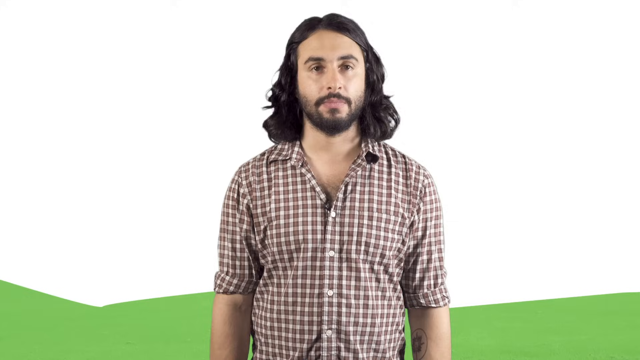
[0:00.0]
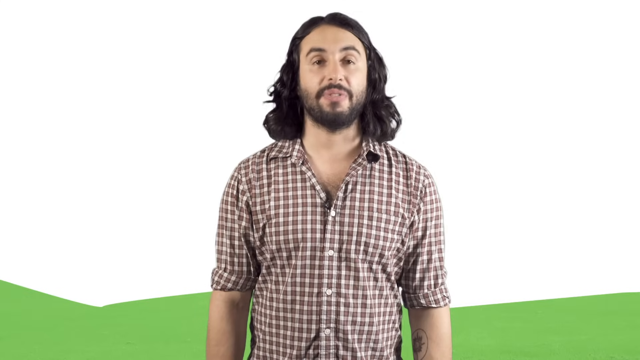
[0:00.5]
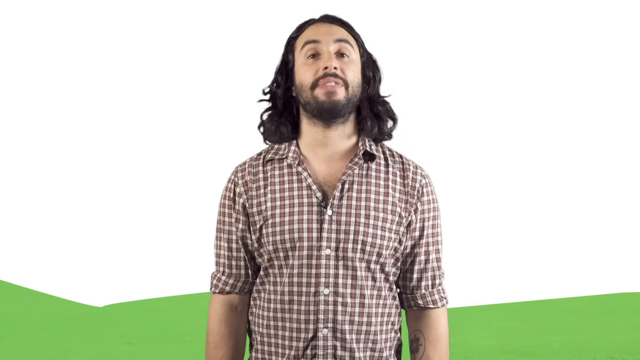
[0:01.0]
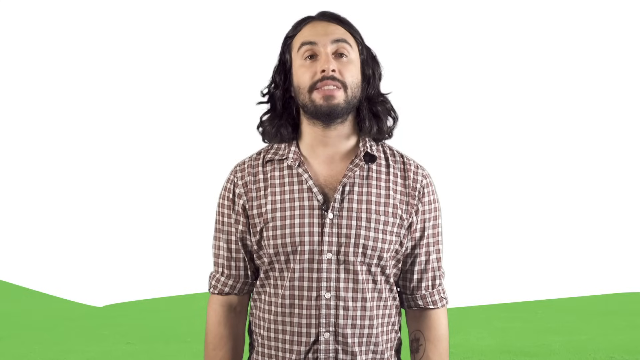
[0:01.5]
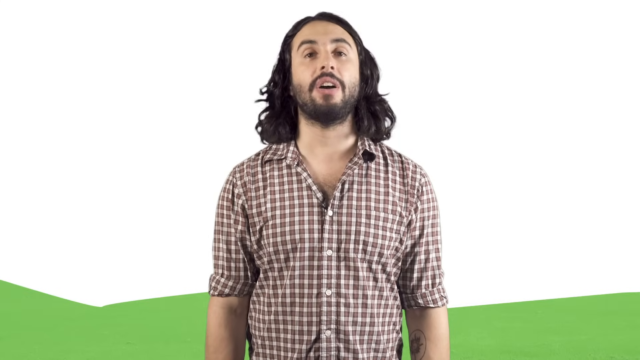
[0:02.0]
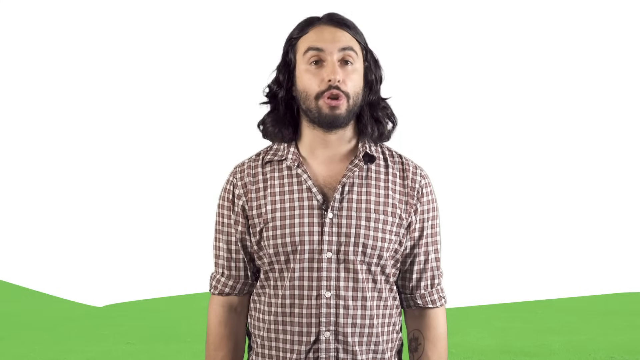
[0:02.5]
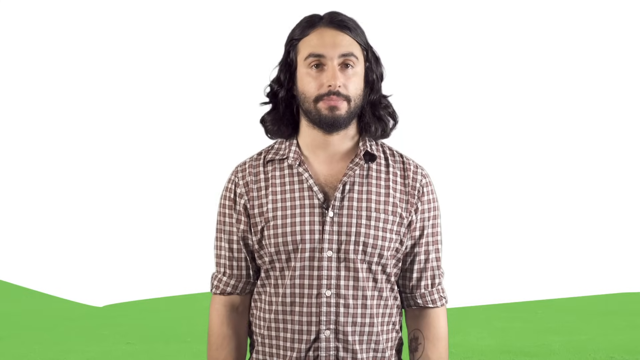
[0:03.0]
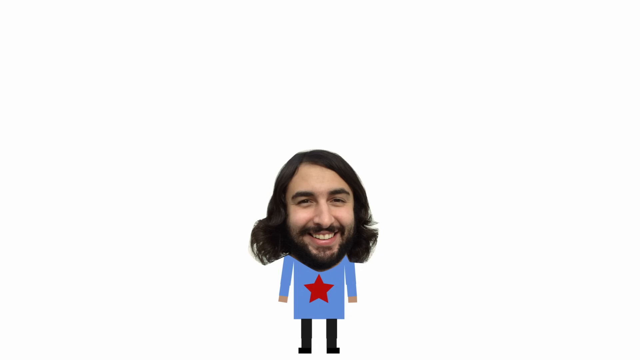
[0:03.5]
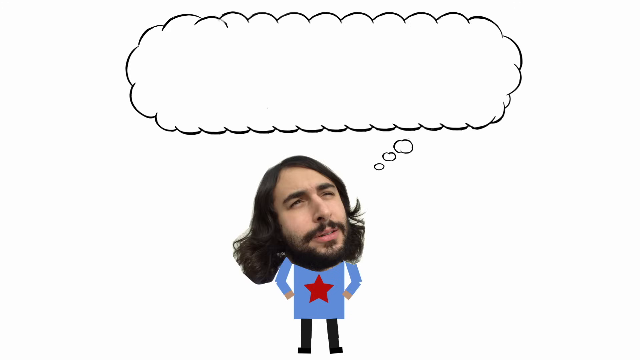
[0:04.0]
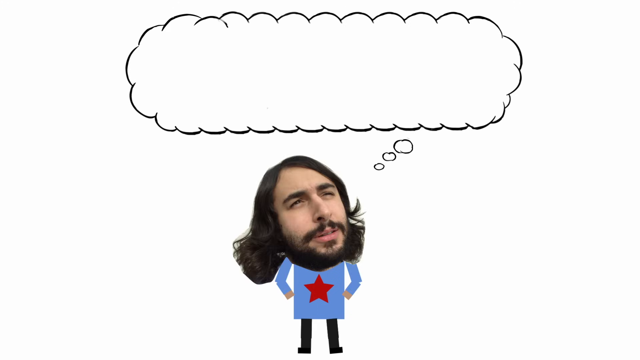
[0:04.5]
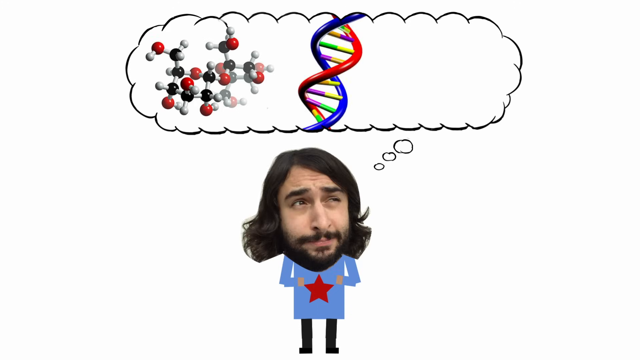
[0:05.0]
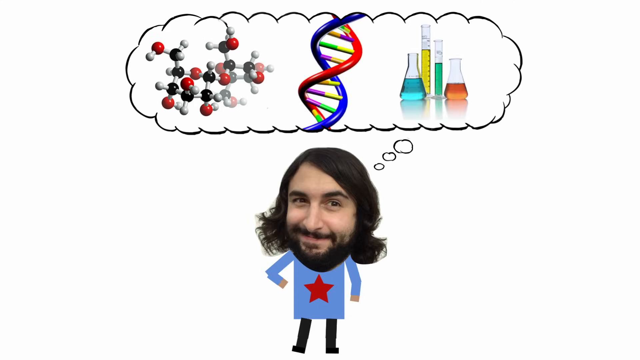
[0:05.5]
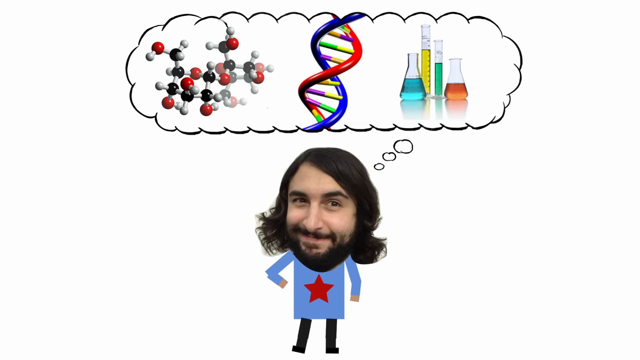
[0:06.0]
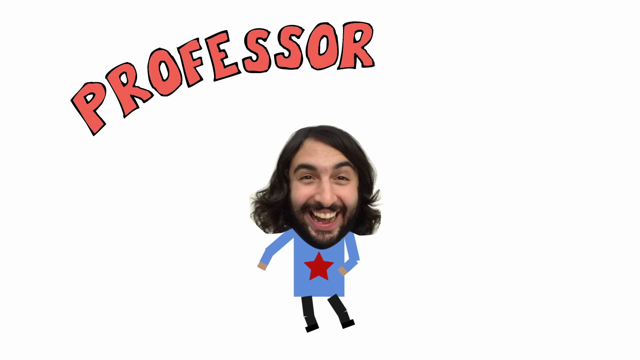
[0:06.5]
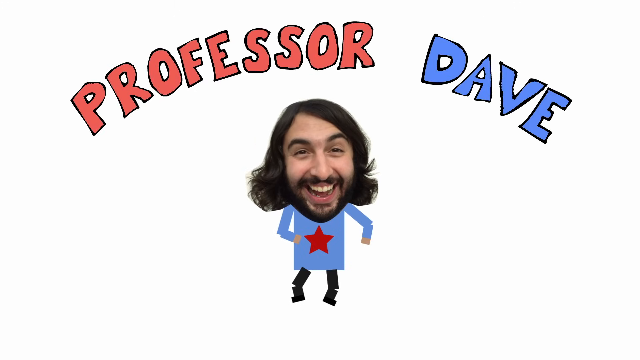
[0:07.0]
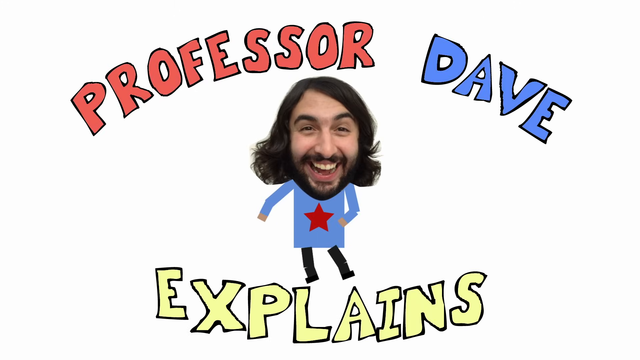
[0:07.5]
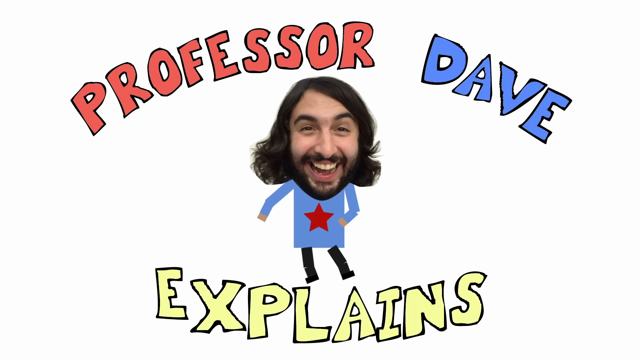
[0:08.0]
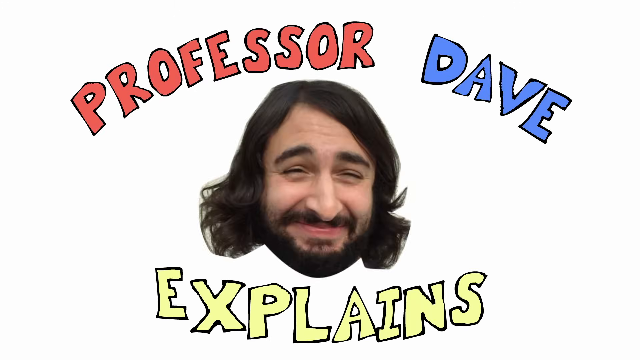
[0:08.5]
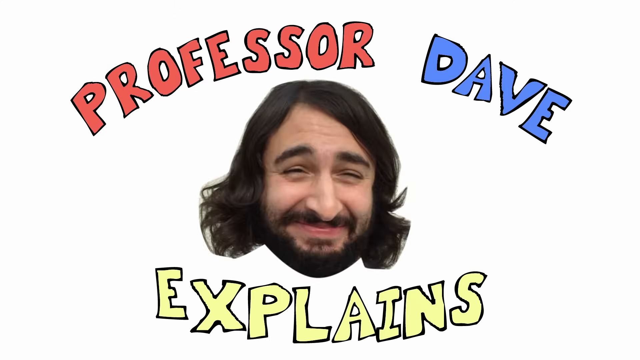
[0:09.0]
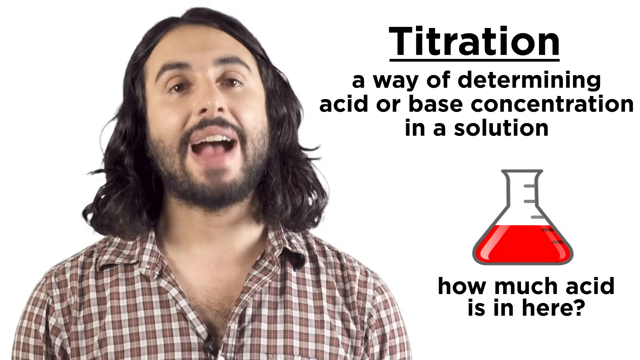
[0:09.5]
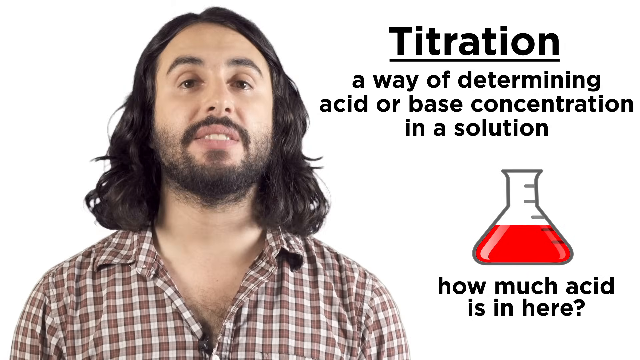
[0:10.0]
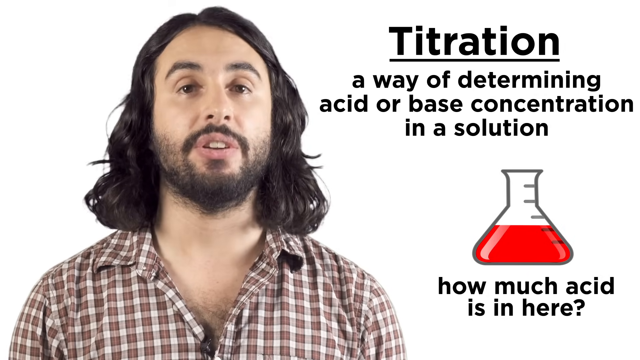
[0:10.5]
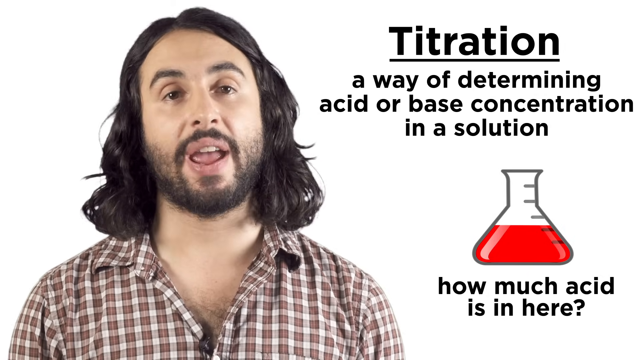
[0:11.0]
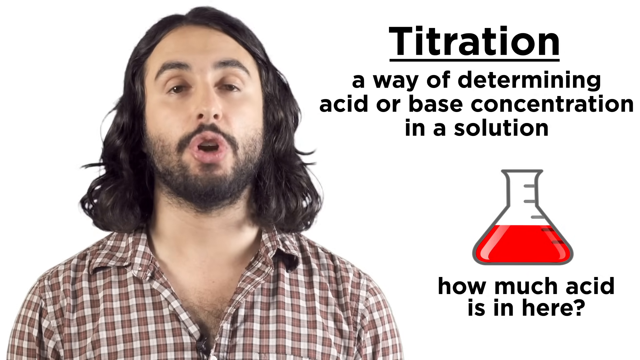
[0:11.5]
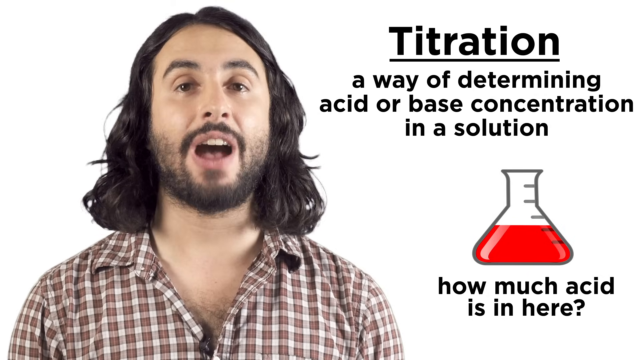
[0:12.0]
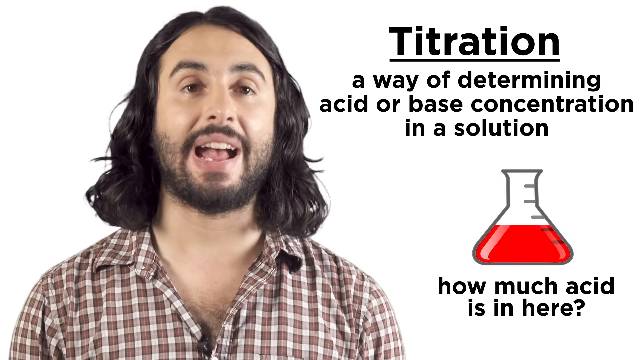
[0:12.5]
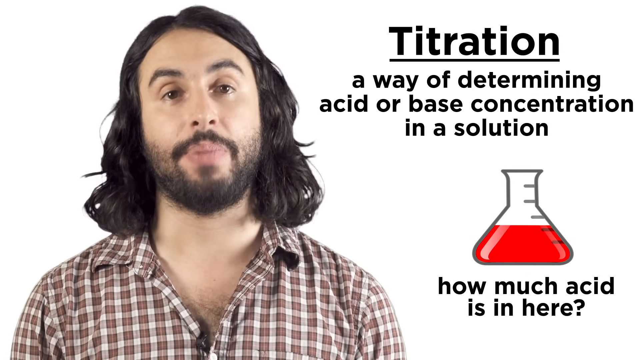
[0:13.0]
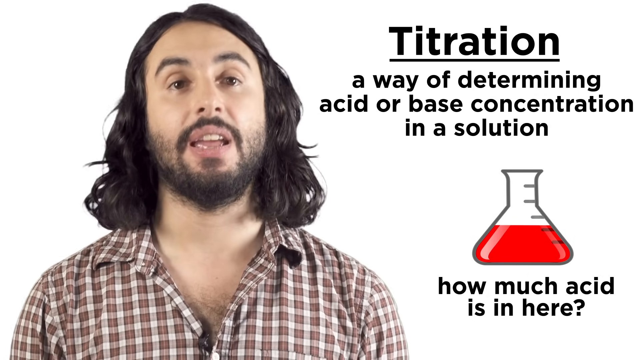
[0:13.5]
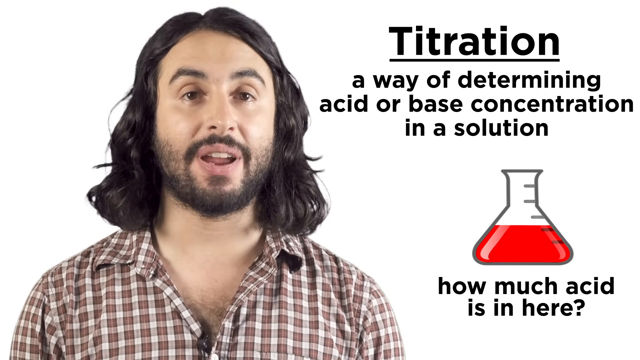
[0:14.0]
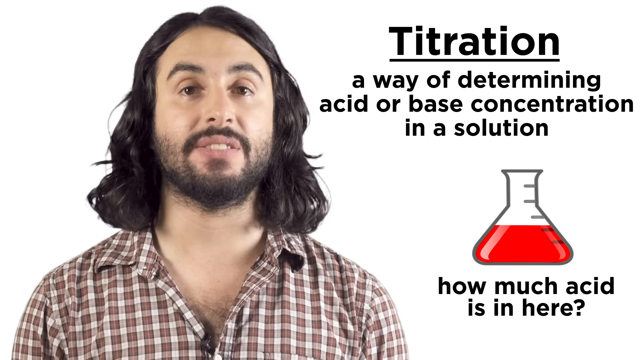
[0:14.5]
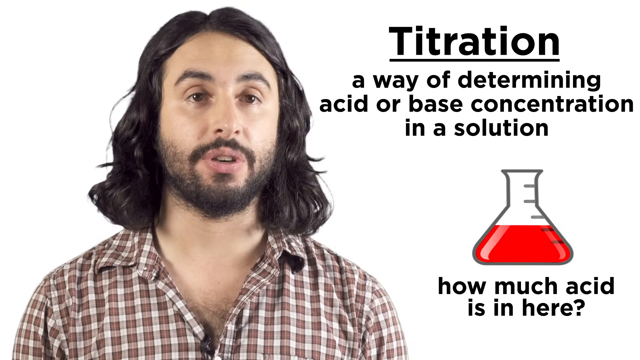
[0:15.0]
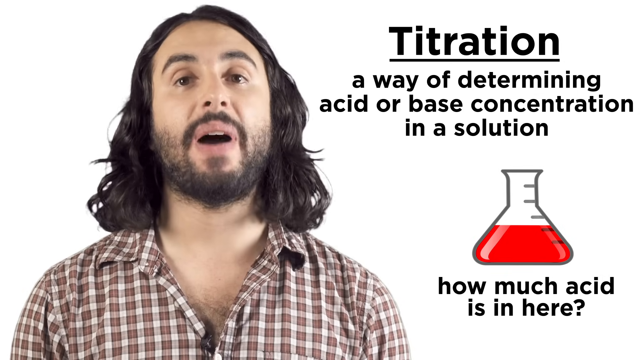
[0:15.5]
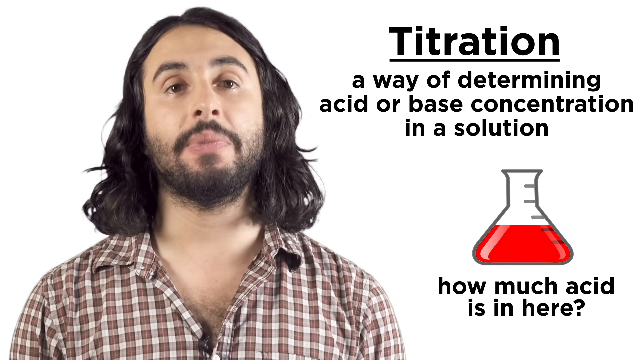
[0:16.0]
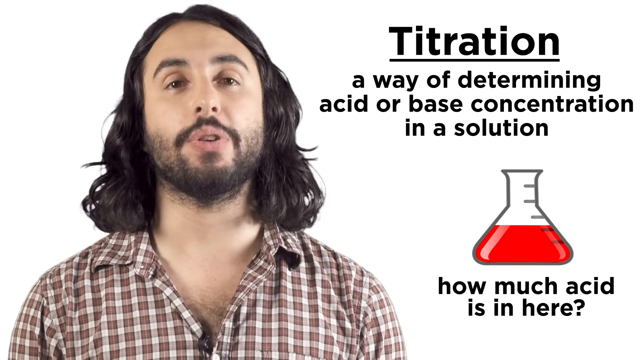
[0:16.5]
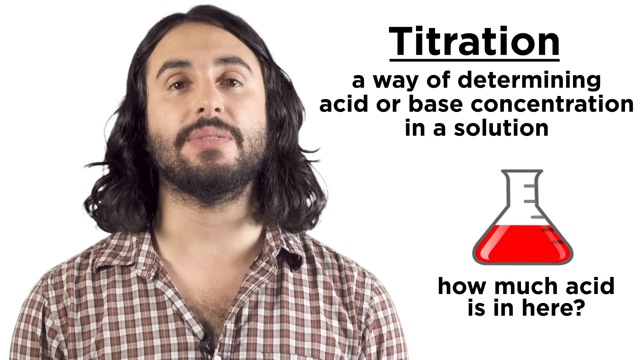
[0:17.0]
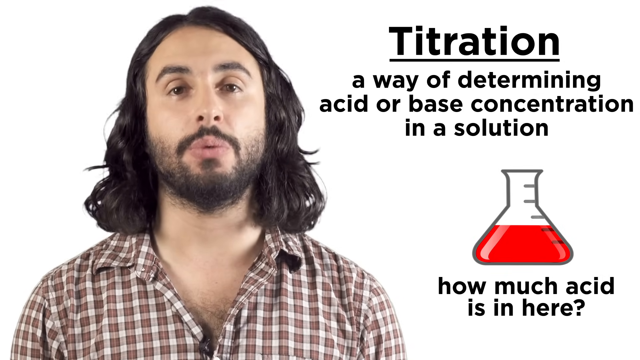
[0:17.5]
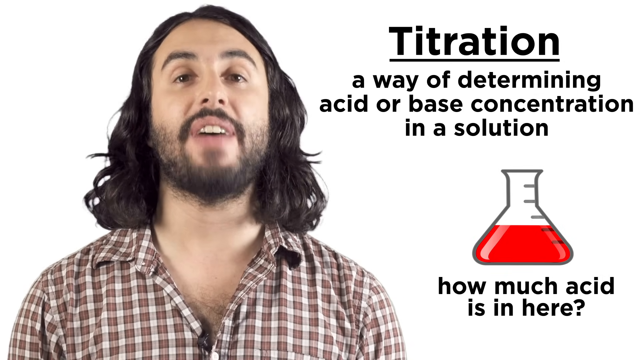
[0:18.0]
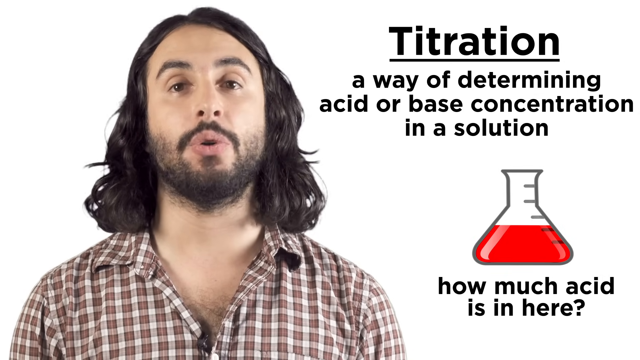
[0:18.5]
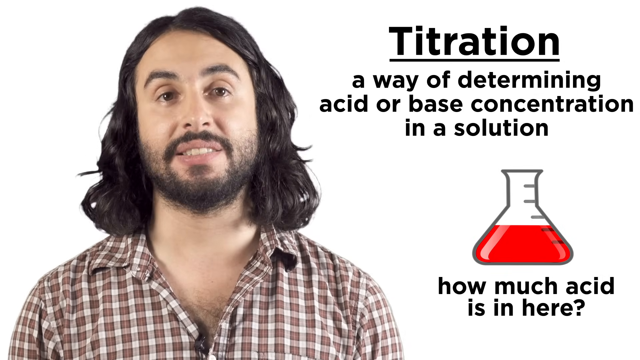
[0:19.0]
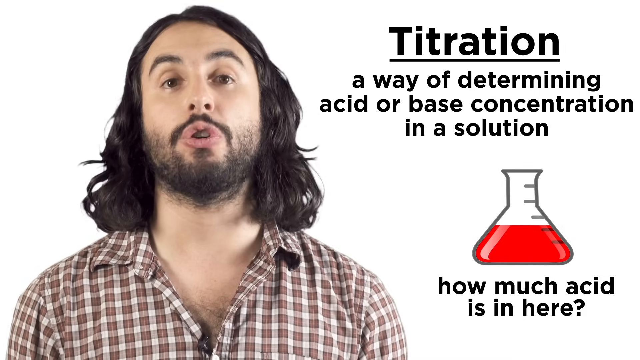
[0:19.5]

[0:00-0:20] A tall man with long hair wears a checked shirt. Beside him, on-screen text reads "titration, a way of determining acid or base concentration in a solution"; he appears to be explaining how much acid is in what he is mixing. There is also an animation: a cartoon character, an animated version of the man who is talking, says something in a word bubble. Above the word bubble are colorful items that look like the items he is using, and other items that look like marbles. The cartoon has long hair and wears a blue t-shirt and a red top; it smiles and faces directly toward the camera, with word bubbles going above its head. He has long black hair and a short beard.